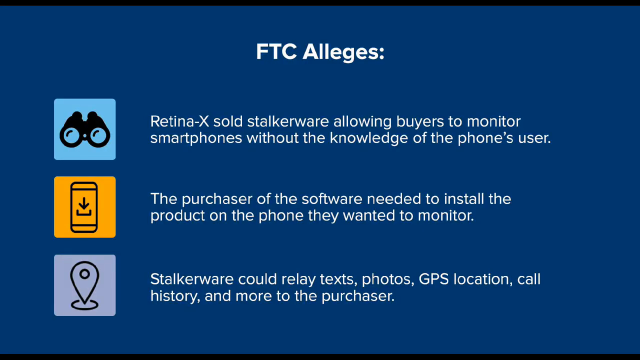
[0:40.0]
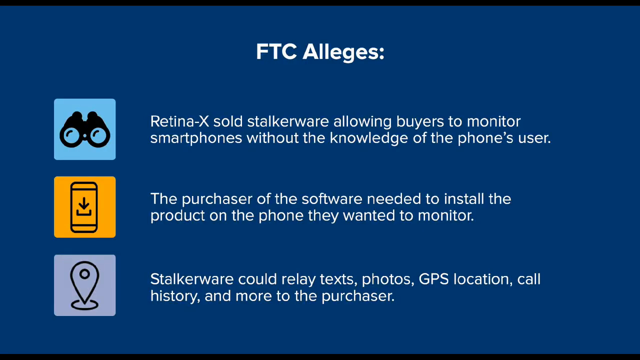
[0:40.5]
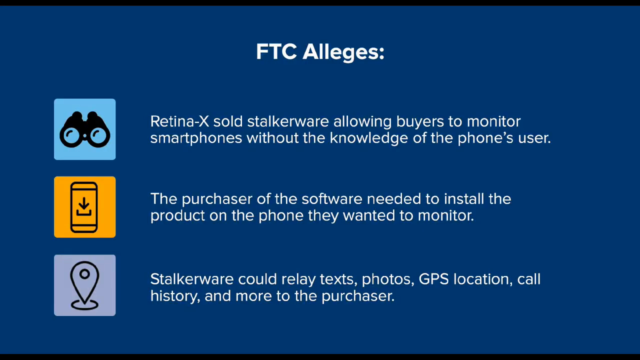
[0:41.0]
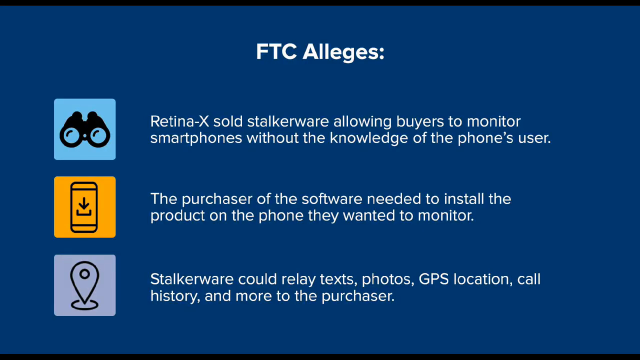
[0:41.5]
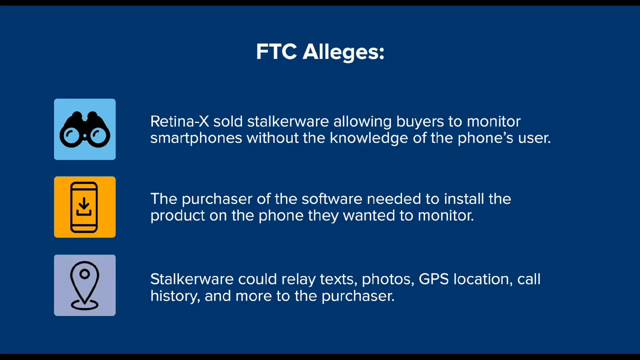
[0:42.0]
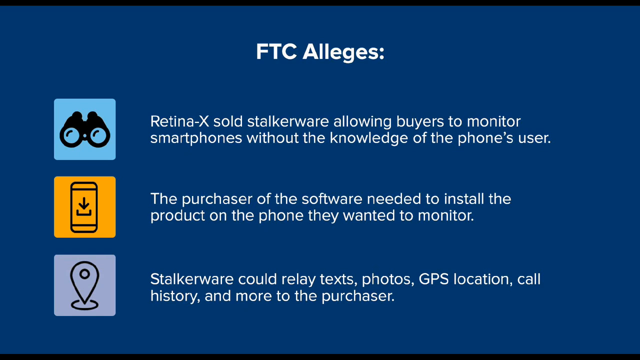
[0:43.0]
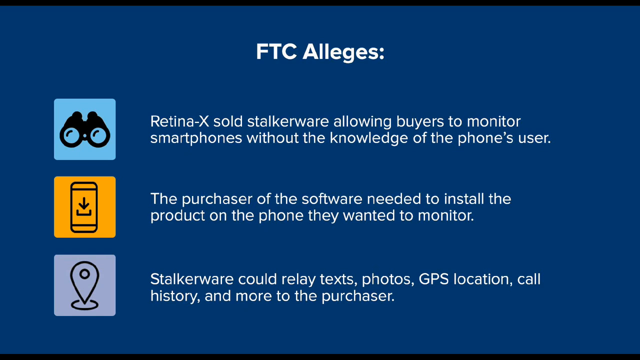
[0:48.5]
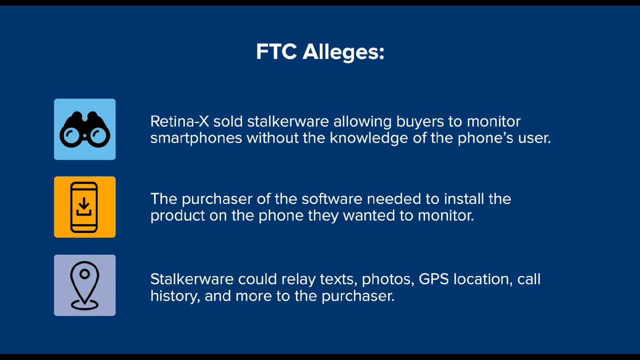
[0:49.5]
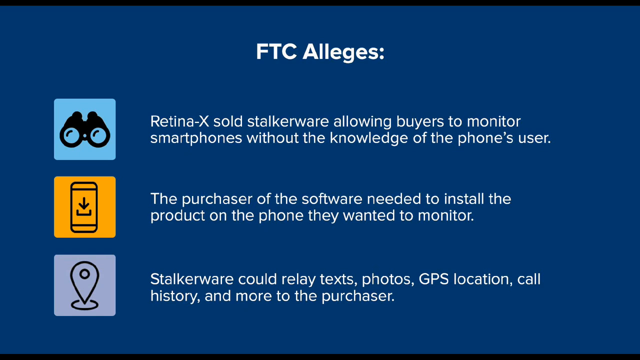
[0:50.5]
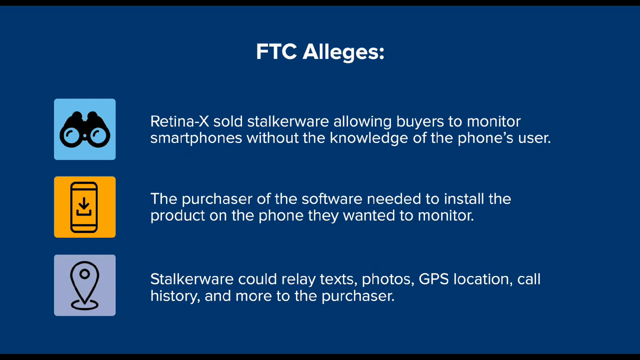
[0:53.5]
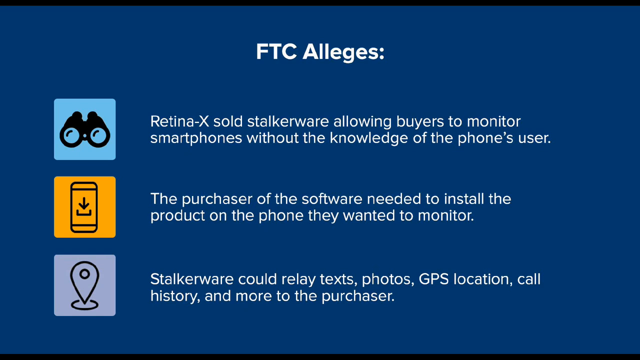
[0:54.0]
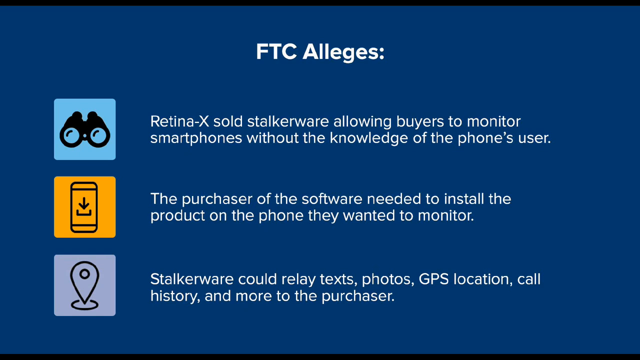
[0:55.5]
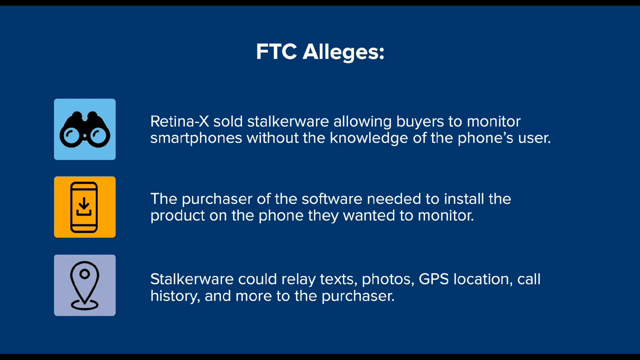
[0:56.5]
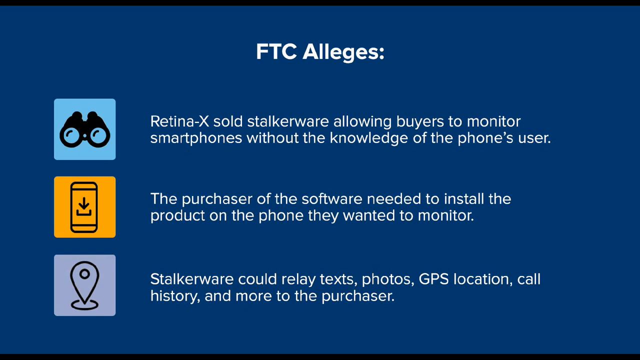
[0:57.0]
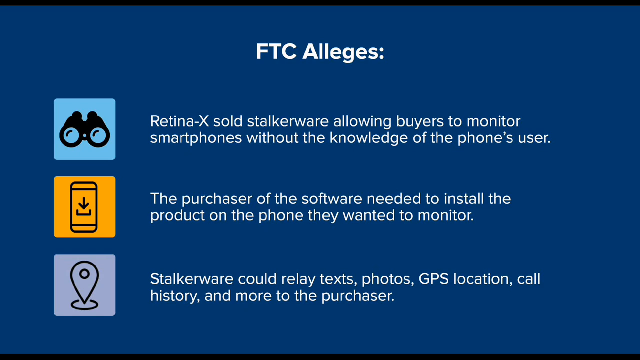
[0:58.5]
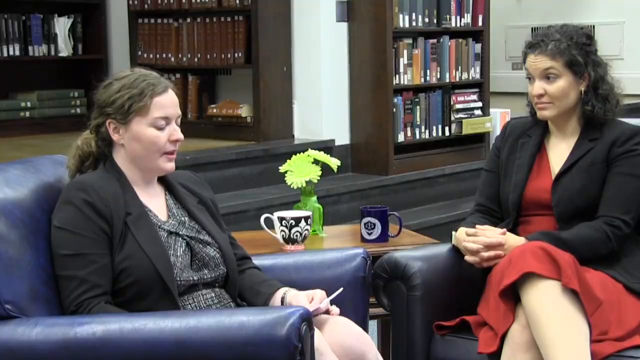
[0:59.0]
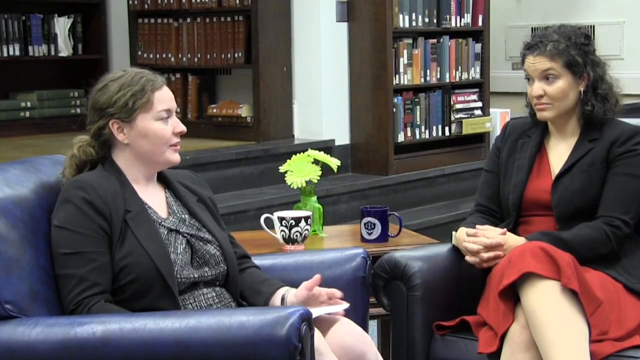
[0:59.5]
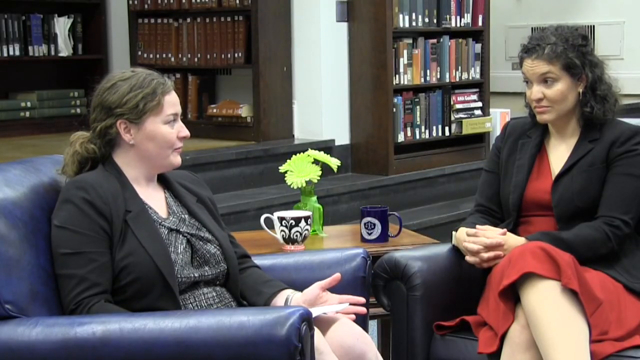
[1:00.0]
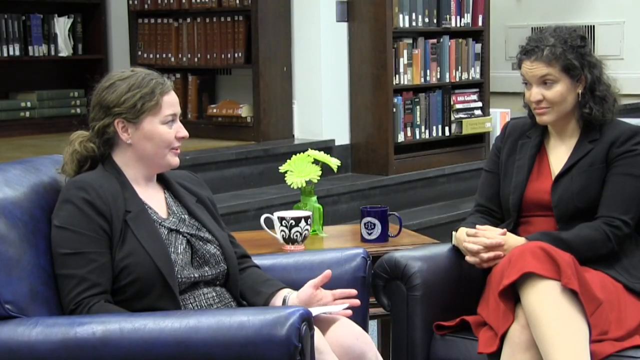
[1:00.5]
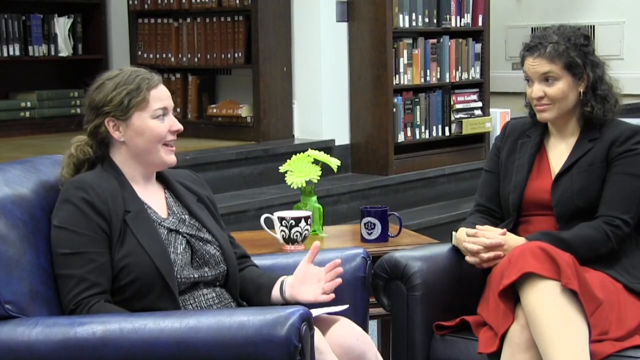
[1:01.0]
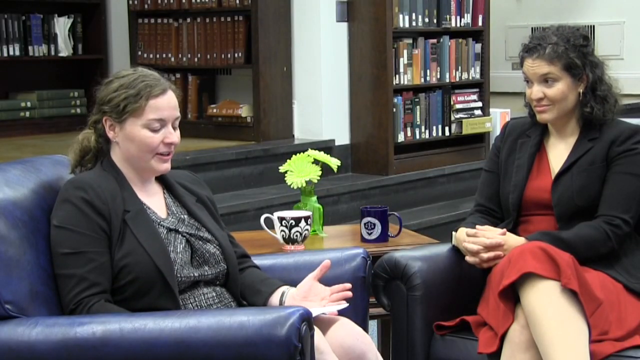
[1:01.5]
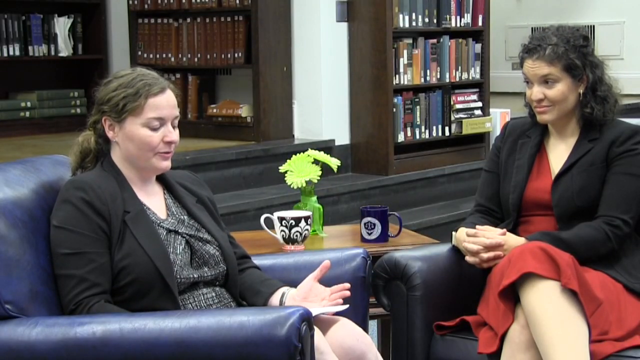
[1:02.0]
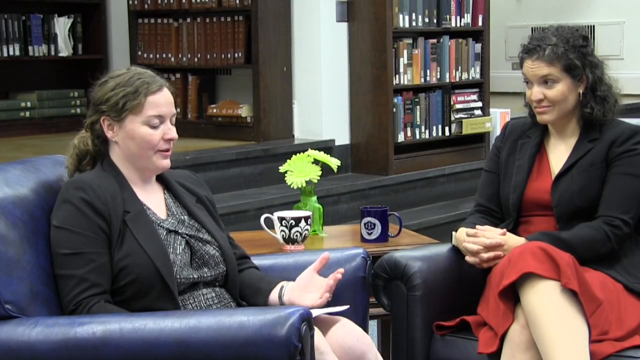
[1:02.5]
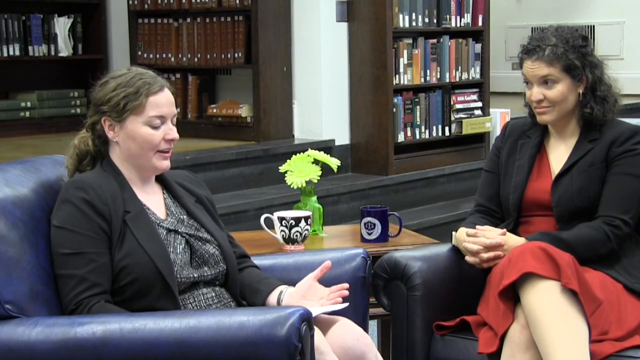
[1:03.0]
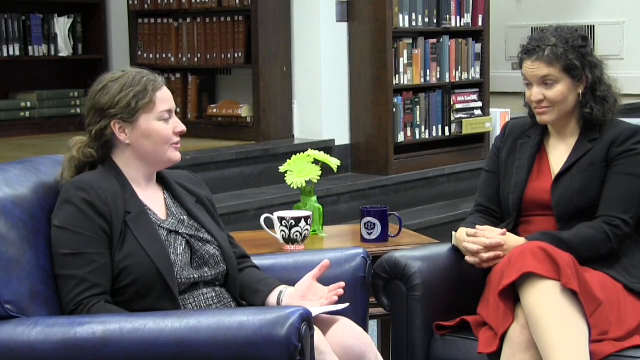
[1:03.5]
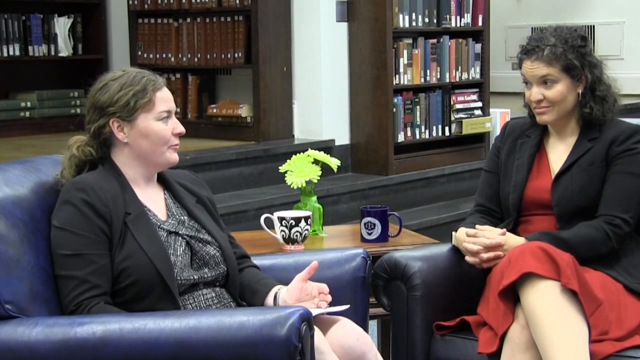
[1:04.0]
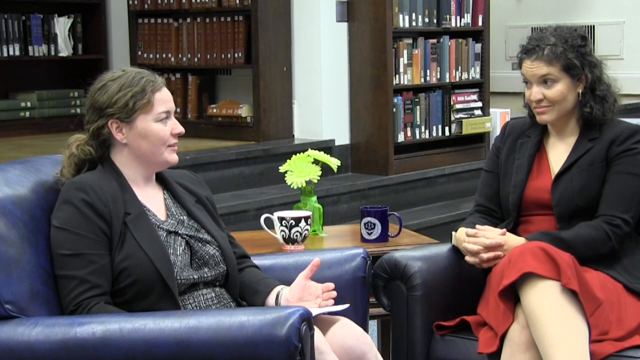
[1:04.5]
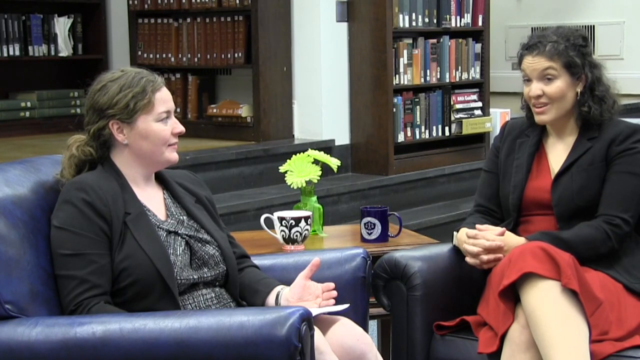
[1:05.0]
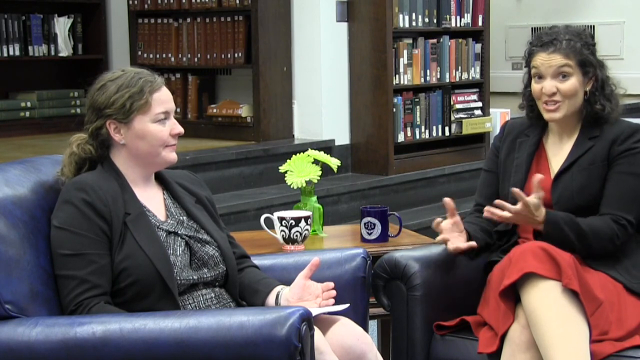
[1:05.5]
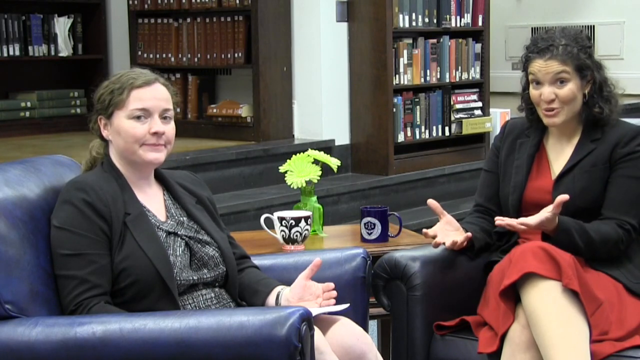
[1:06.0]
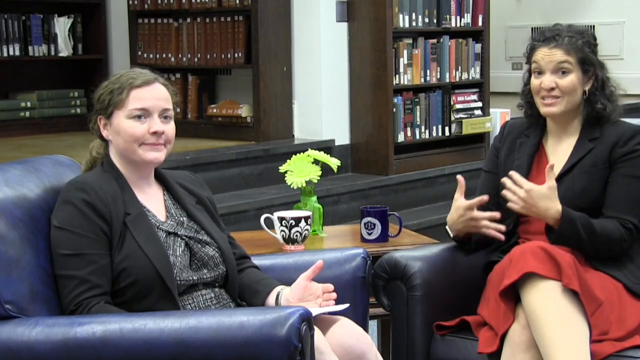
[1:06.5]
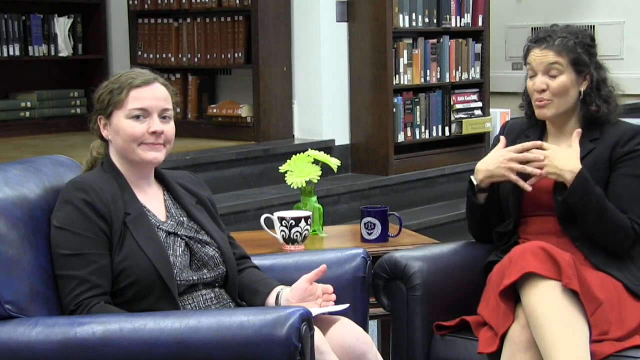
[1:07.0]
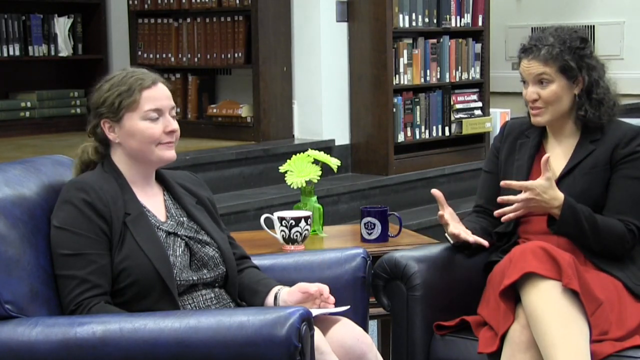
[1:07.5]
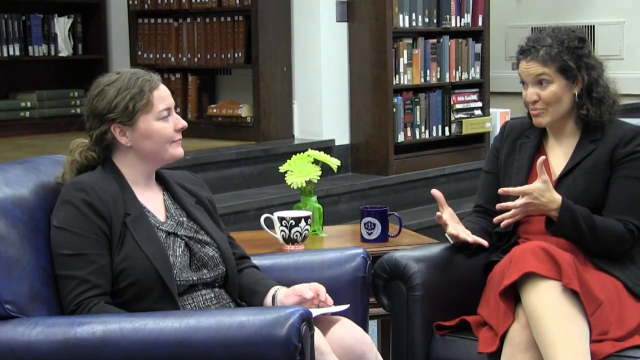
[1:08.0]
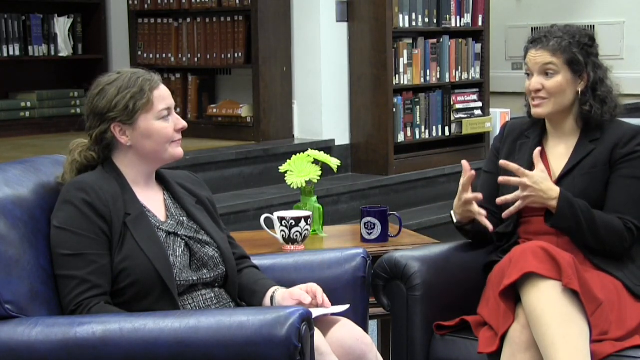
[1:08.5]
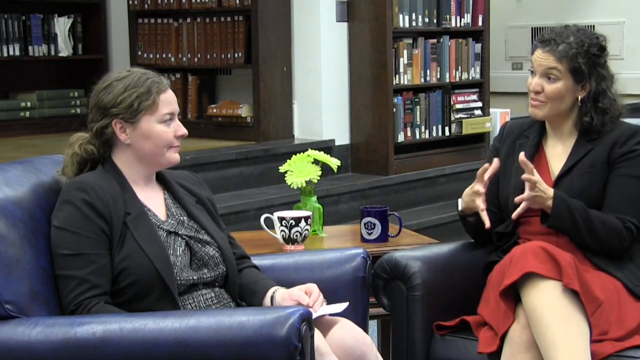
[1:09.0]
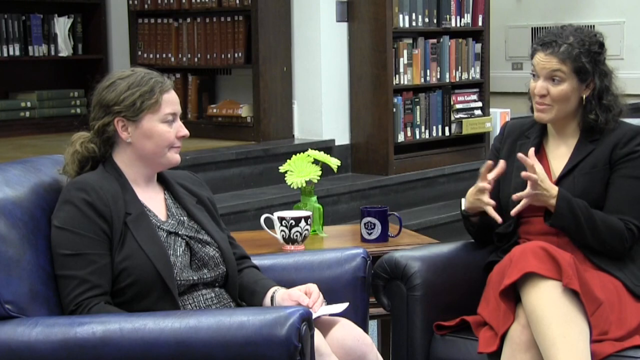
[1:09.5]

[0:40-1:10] Text states that the FTC alleges that certain companies "allow buyers to monitor smartphones without the knowledge of the phone's user." An image of binoculars appears along with another cell phone graphic. Further text reads "stalkerware could relay text, photos, GPS locations, call history, and more to the purchaser."